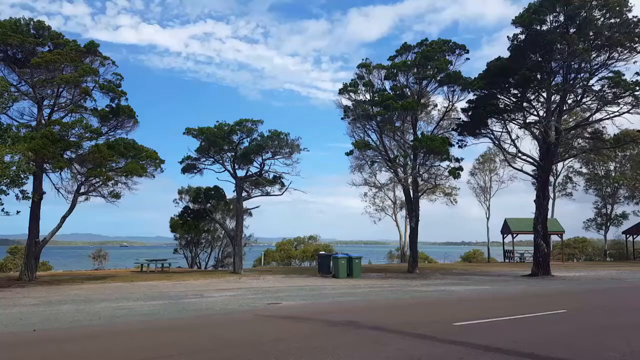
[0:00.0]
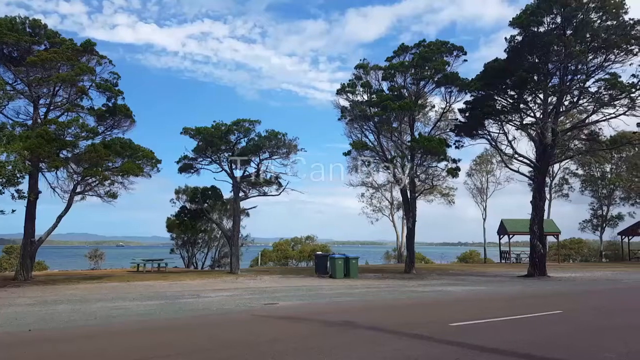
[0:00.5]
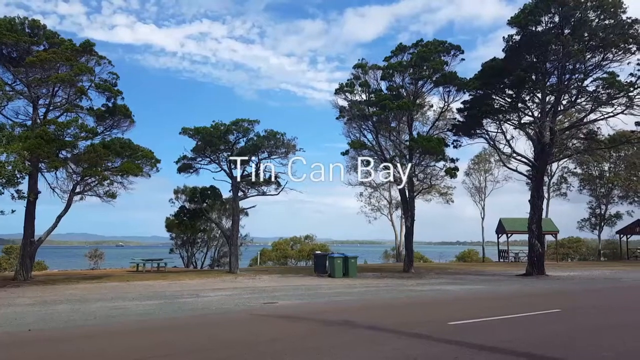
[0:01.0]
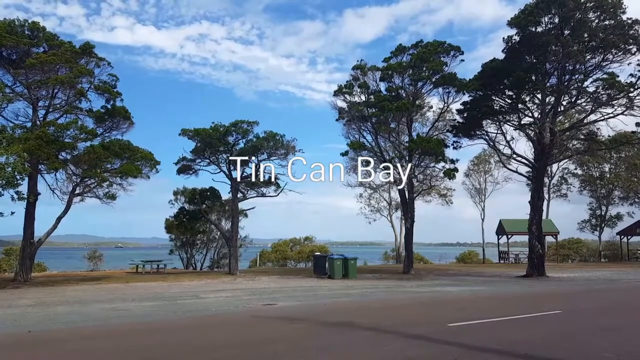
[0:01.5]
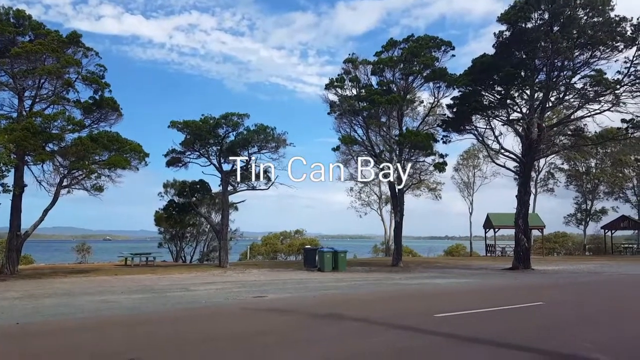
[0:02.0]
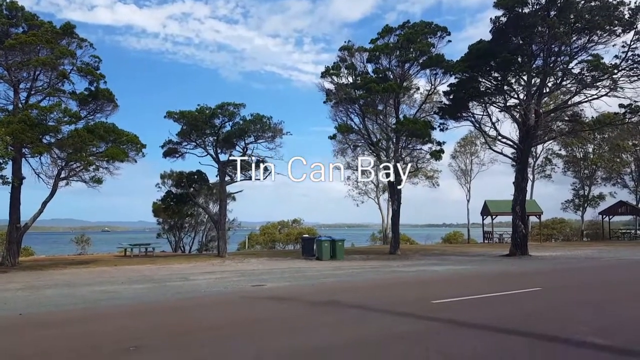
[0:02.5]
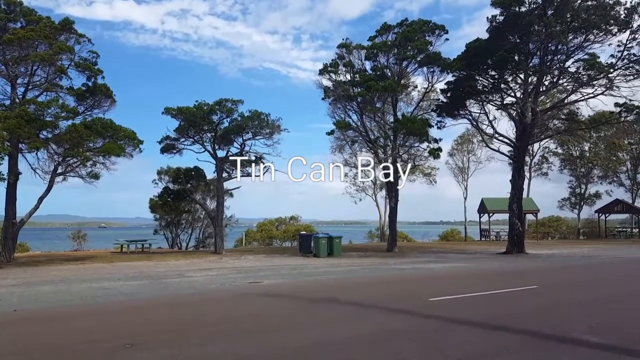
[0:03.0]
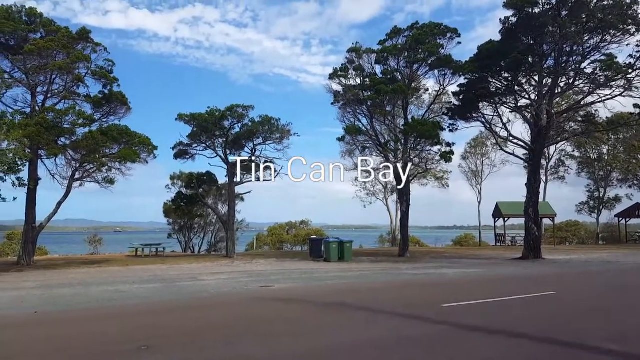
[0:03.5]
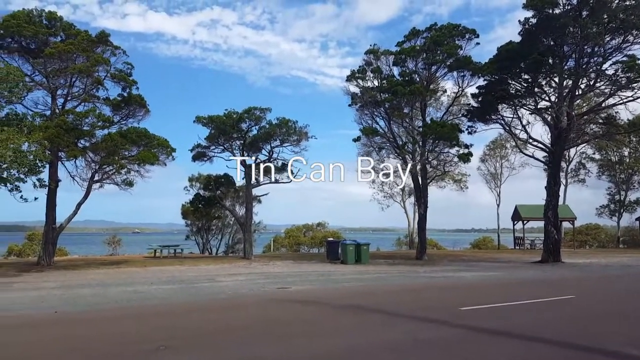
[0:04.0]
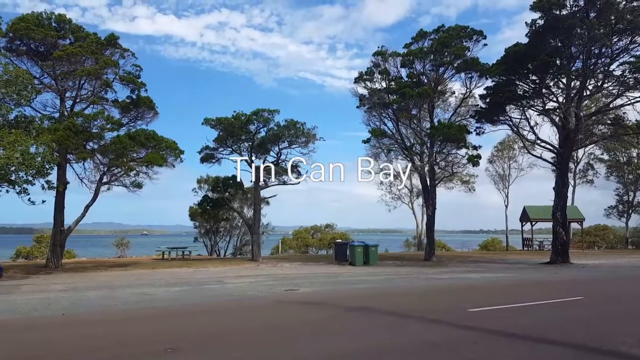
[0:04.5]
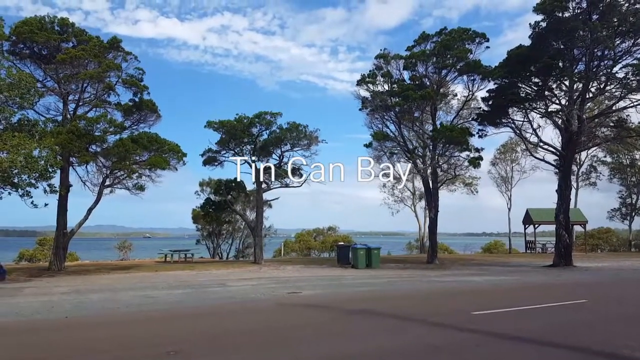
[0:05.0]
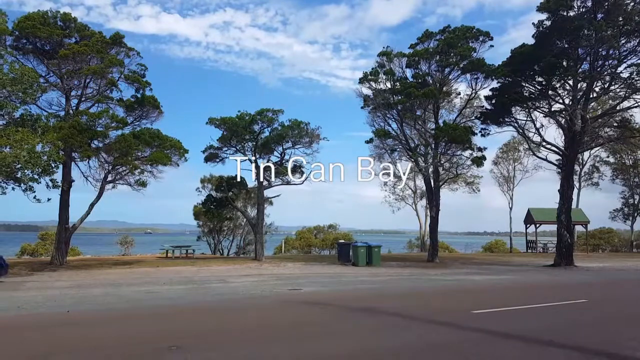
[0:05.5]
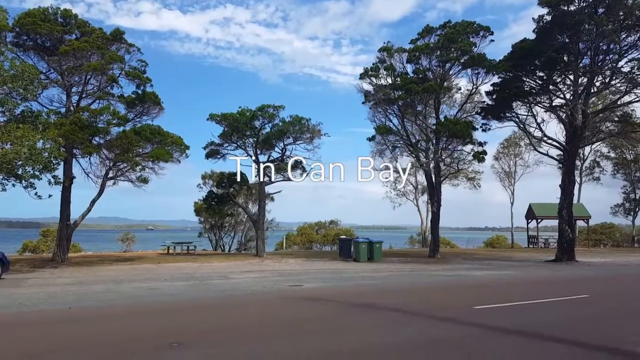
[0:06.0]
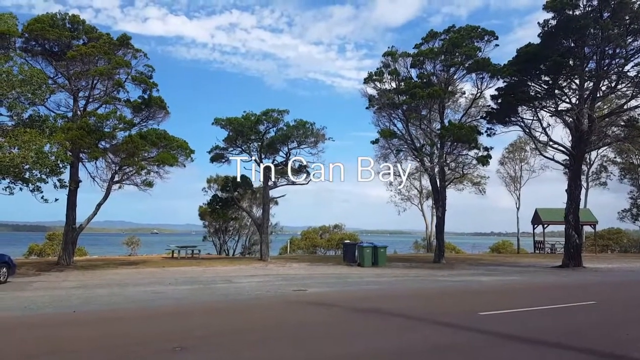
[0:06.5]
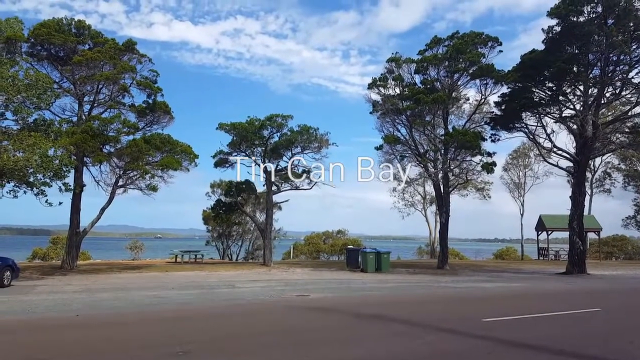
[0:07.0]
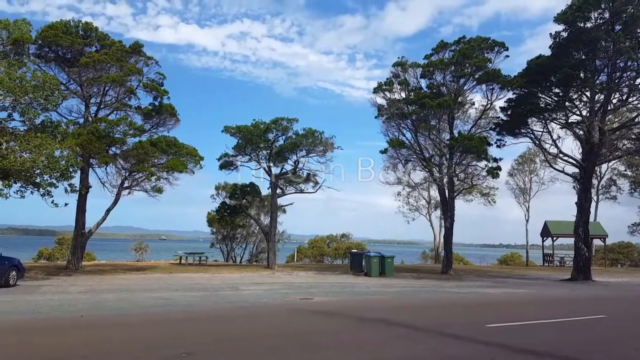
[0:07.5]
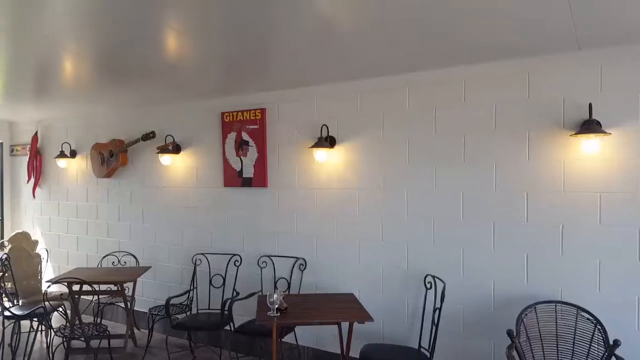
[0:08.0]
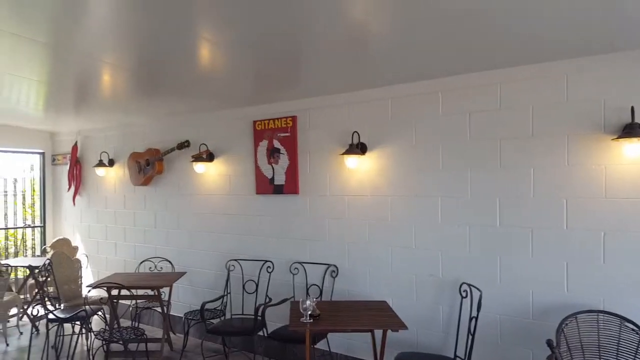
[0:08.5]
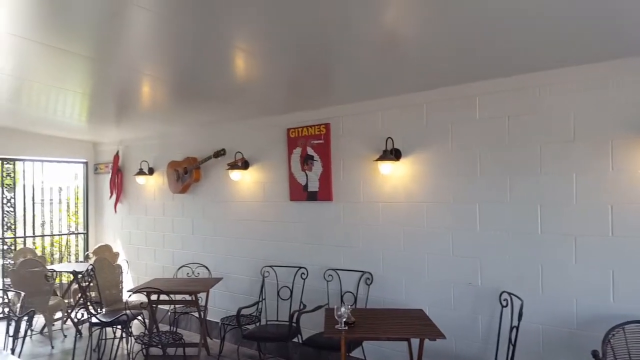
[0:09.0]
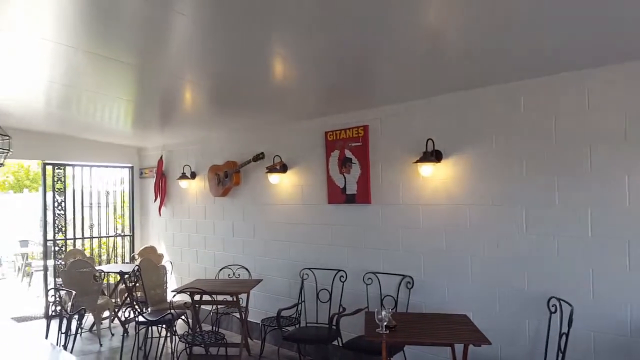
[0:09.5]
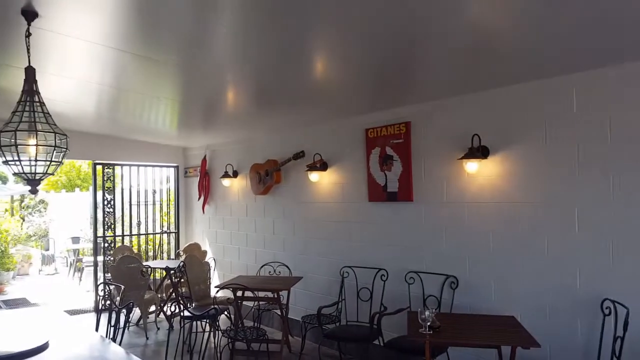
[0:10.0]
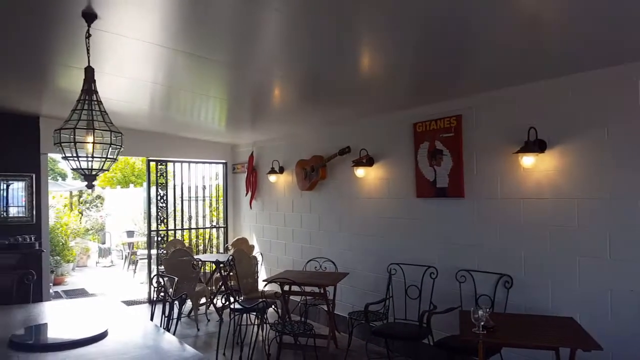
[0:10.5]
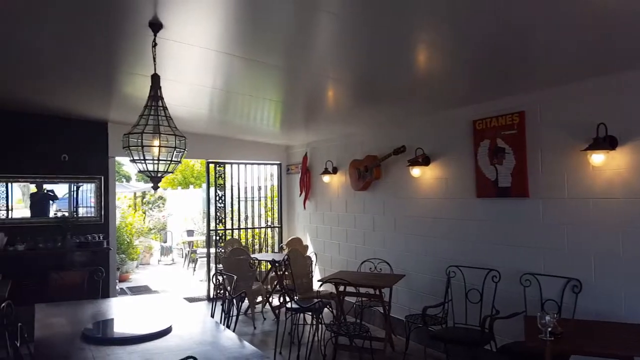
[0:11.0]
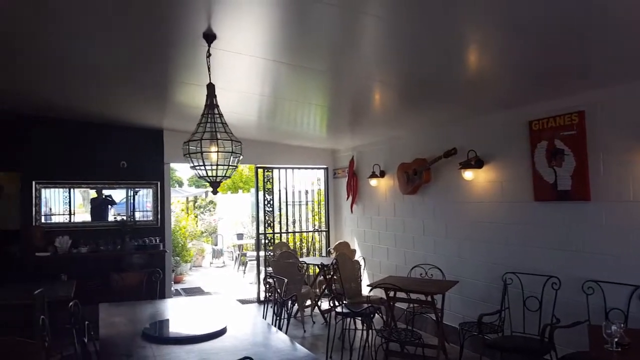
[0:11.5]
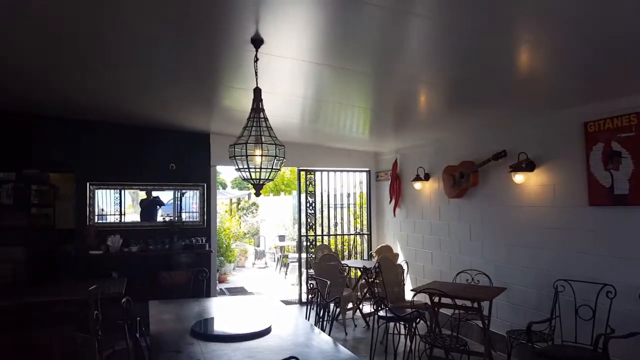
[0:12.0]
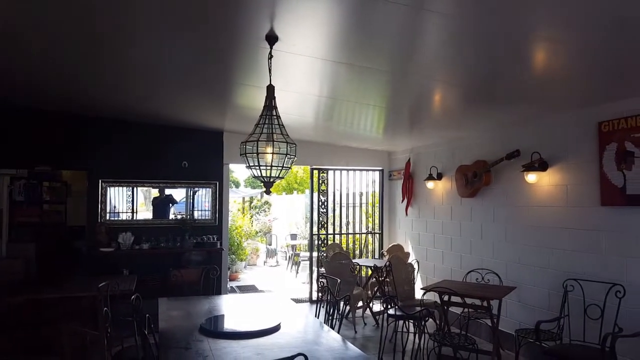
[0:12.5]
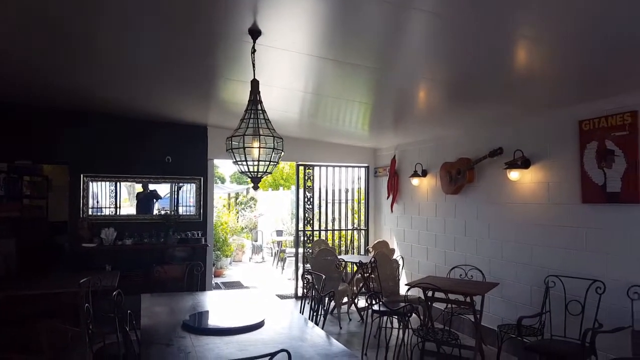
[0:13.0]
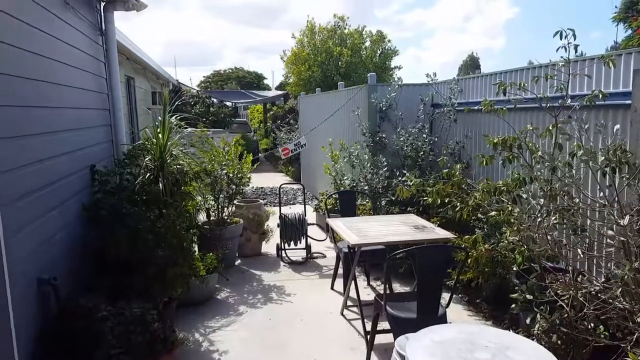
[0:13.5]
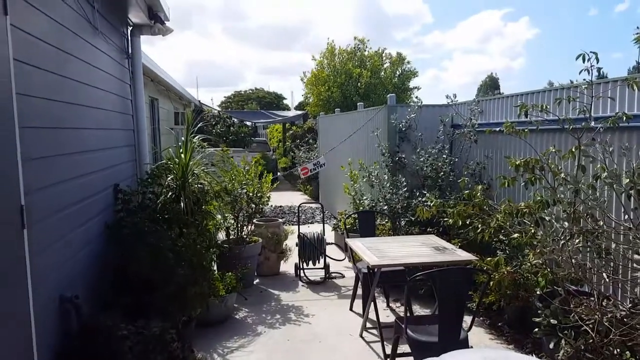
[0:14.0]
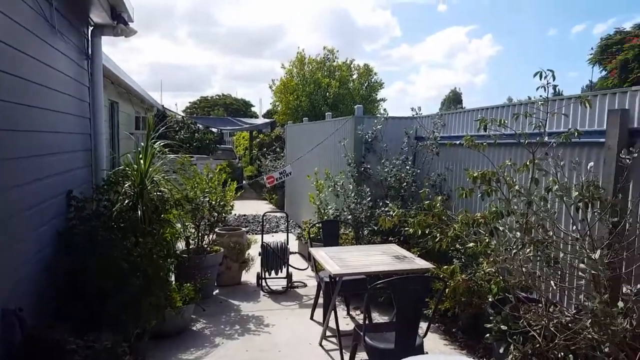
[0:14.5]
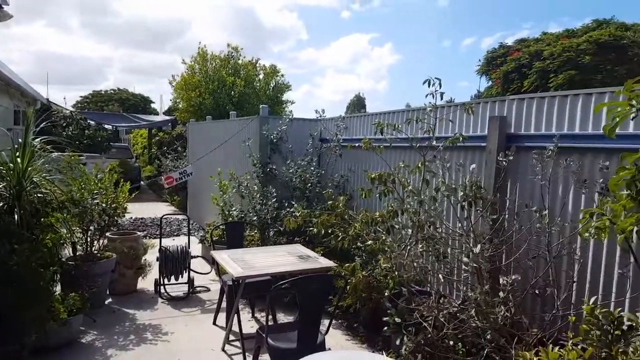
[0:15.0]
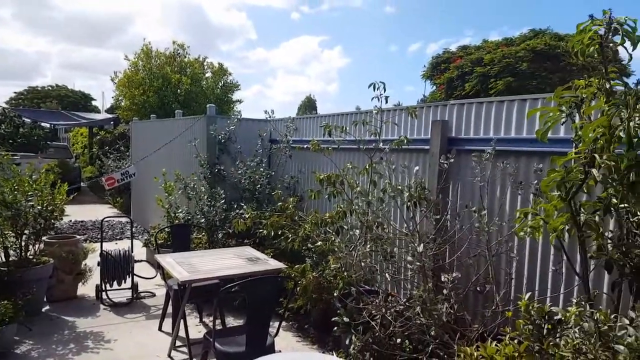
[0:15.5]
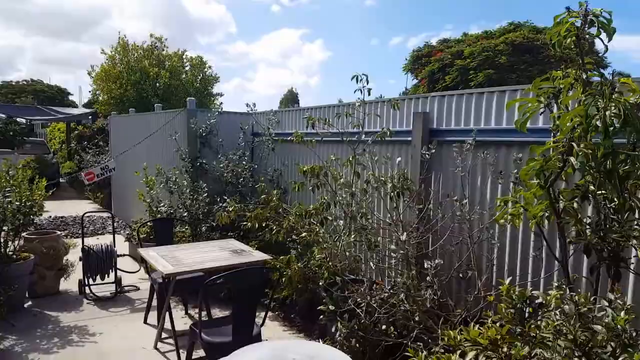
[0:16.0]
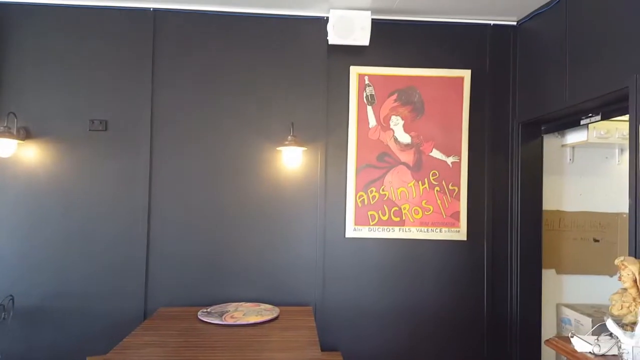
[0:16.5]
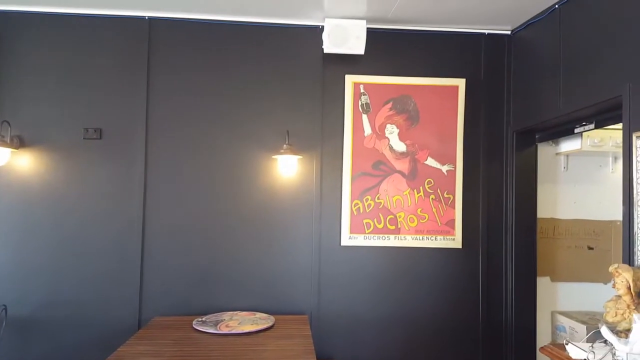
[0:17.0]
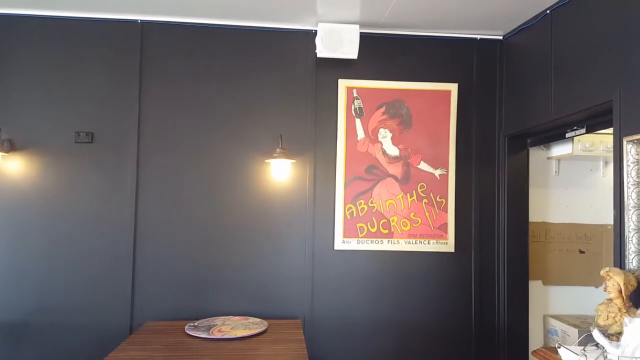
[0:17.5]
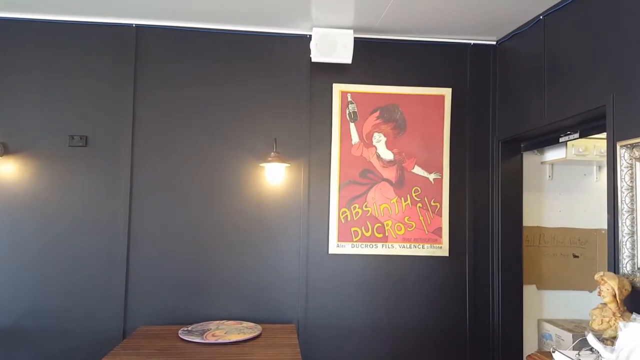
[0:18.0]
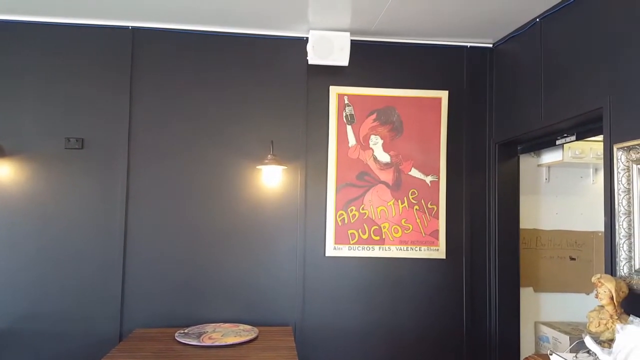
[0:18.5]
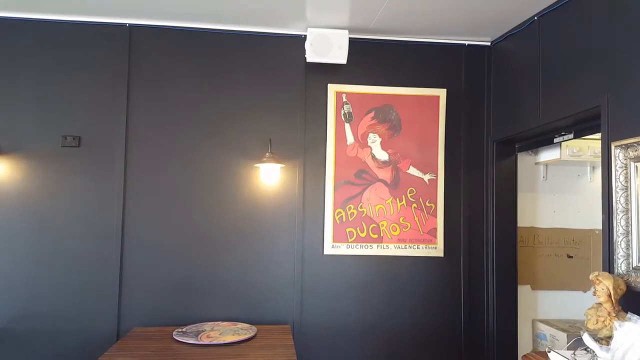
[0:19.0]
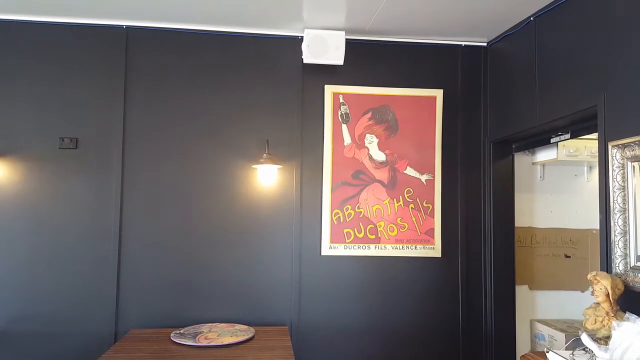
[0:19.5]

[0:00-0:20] Several different scenes show an area that looks like it is near a lake. The first scene appears to be a parking lot, with a couple of picnic tables and trash cans in the middle. There are four prominent trees, a lake in the foreground, and a clear blue sky with clouds. More trees and bushes are in the background on the right side, and the lake is visible. White text reads "Tin Can Bay". The camera is a bit shaky as it looks around. The view then changes to the inside of a building with white walls that looks like a restaurant, with three tables with chairs around them. A guitar is on the wall, lights are attached to the wall and hang down, and a red poster shows what looks like a Mexican man in a white shirt with a top hat dancing; it reads "Gitanes". The camera moves to the left and shows a doorway with bright light coming in, then what looks like the backyard of a house. There is a sign that says "no entry", a table with two seats, what looks like a garden hose wrapped around a coil on a stand, and several pots with green plants. The camera goes to the right a bit, showing a fence with a lot of plants next to it. The scene then changes to the inside of a building with black walls, where a red poster reads "Absinthe do Cross Fields" and shows a white-skinned woman in a red dress holding up a bottle in her right hand. The lamps appear to be the same style as those in the building with white walls.